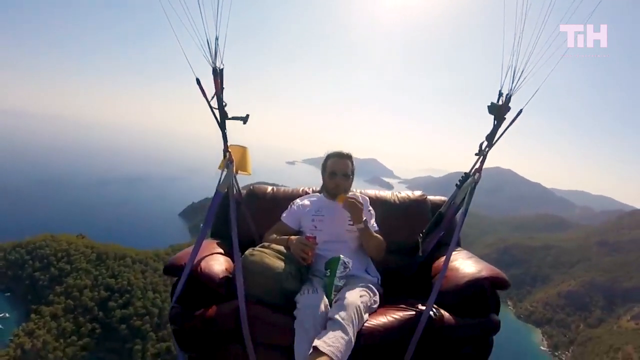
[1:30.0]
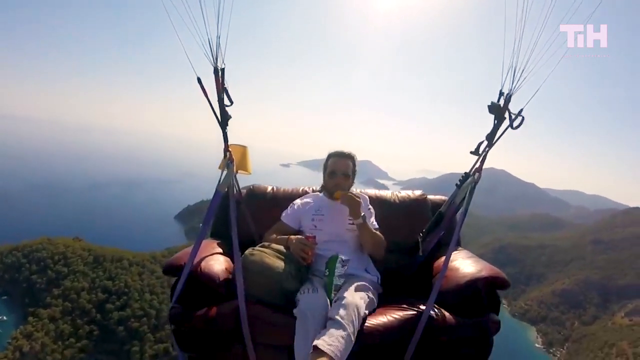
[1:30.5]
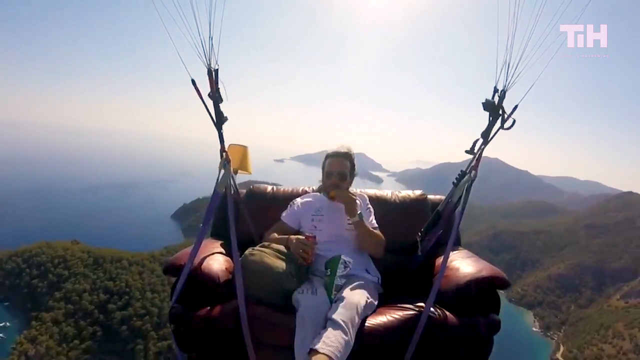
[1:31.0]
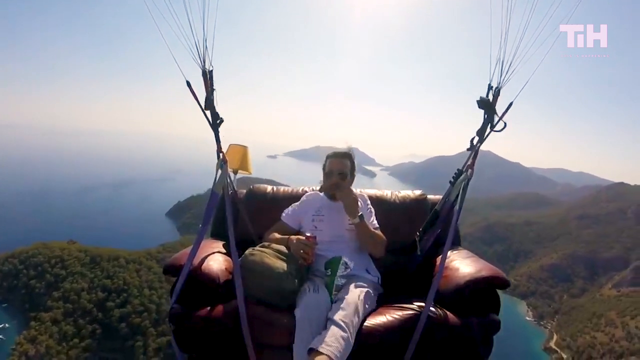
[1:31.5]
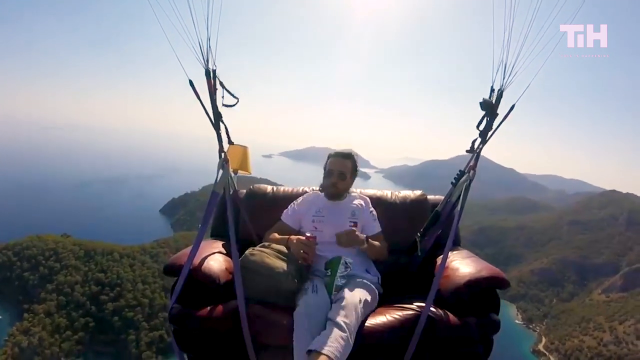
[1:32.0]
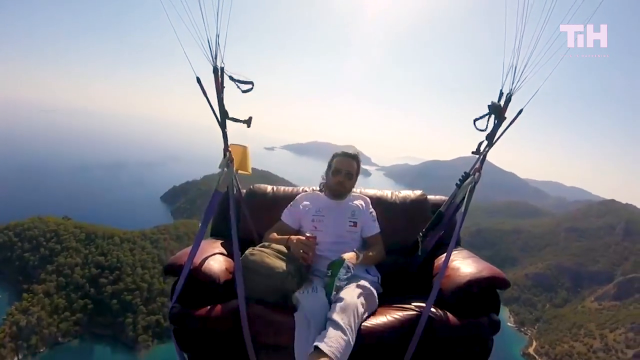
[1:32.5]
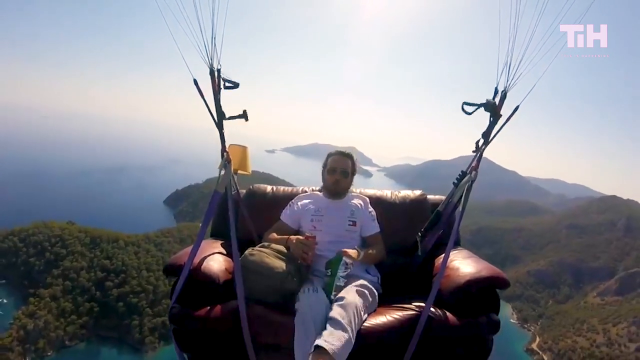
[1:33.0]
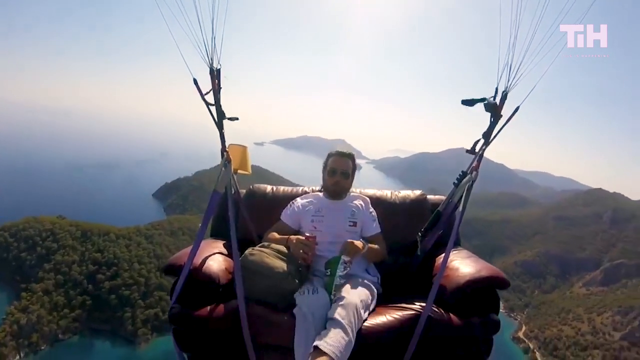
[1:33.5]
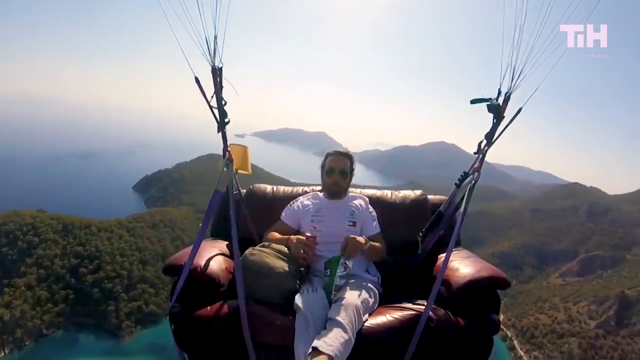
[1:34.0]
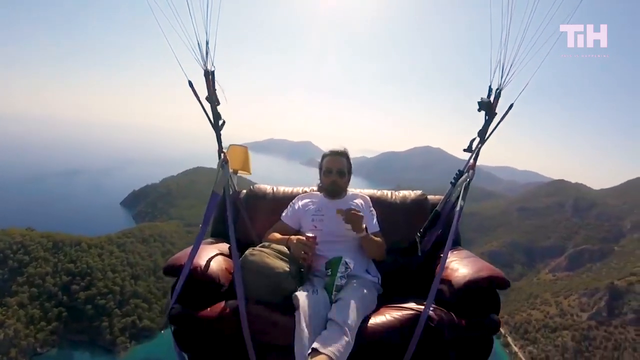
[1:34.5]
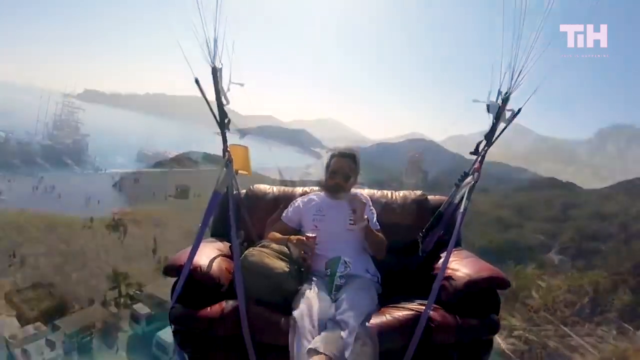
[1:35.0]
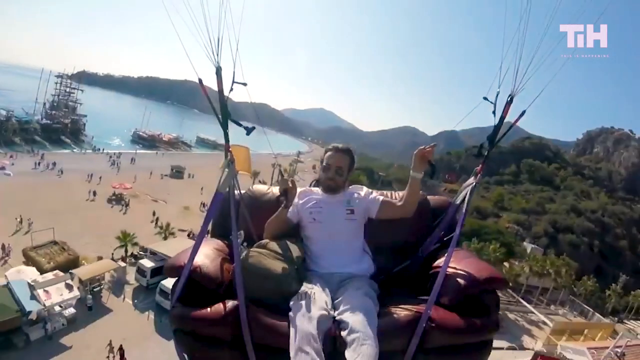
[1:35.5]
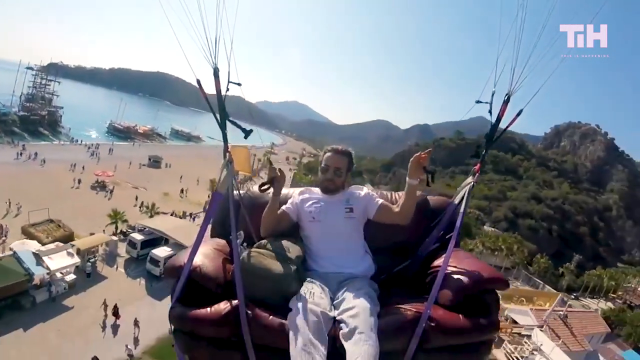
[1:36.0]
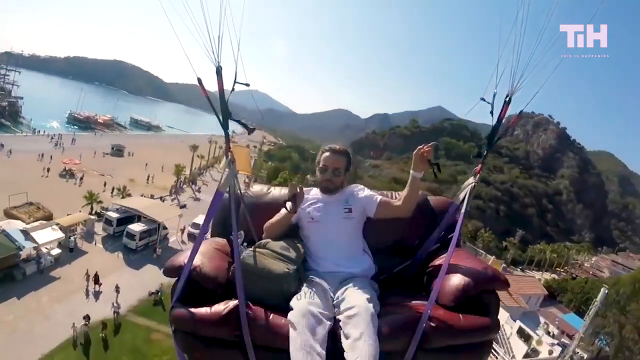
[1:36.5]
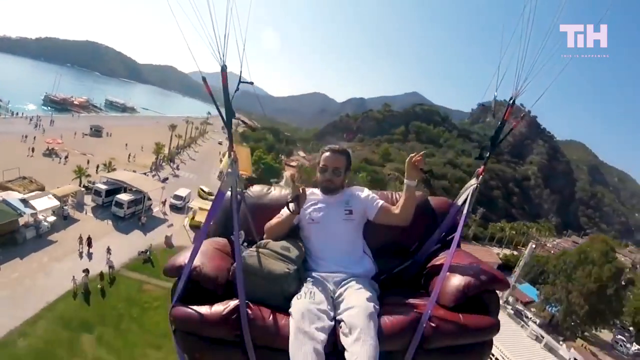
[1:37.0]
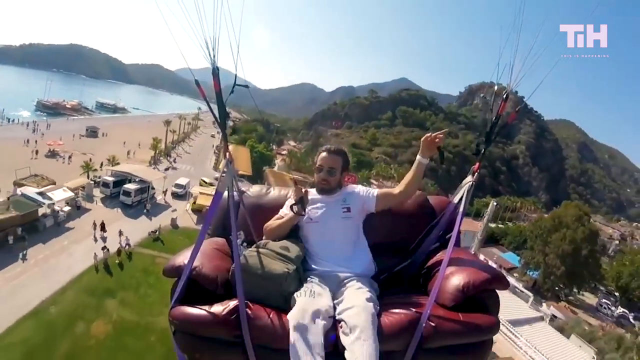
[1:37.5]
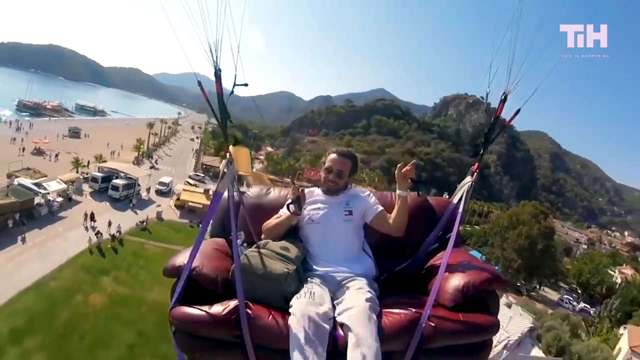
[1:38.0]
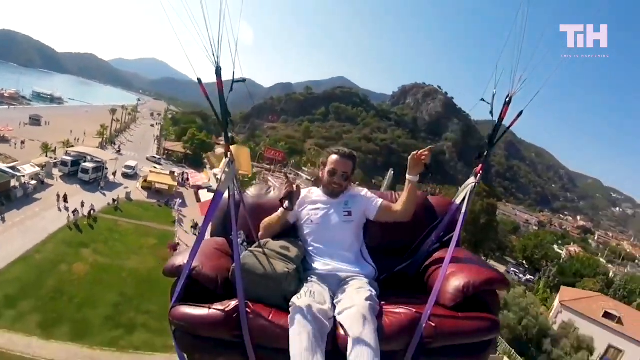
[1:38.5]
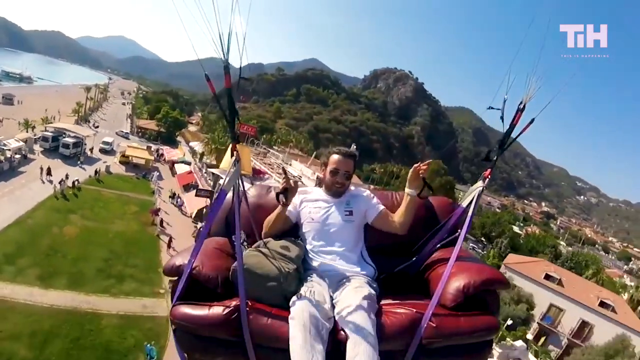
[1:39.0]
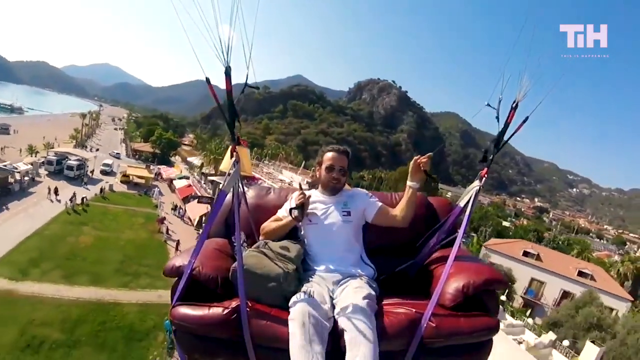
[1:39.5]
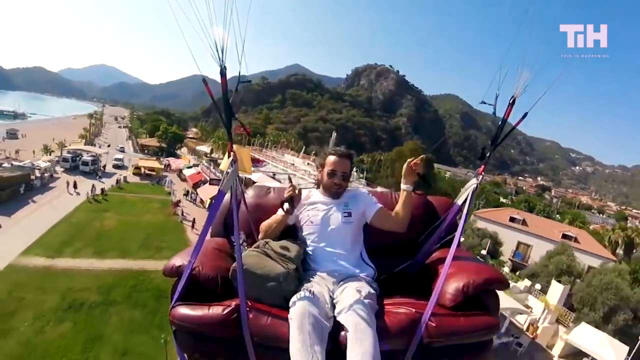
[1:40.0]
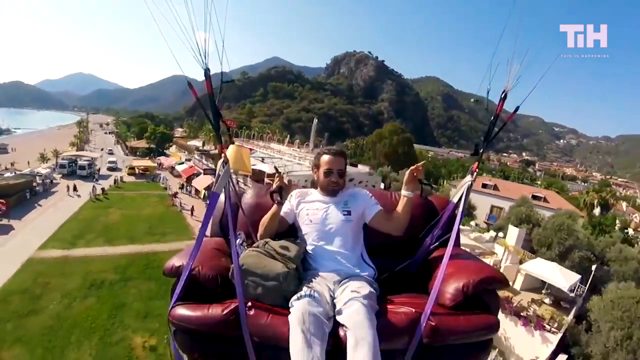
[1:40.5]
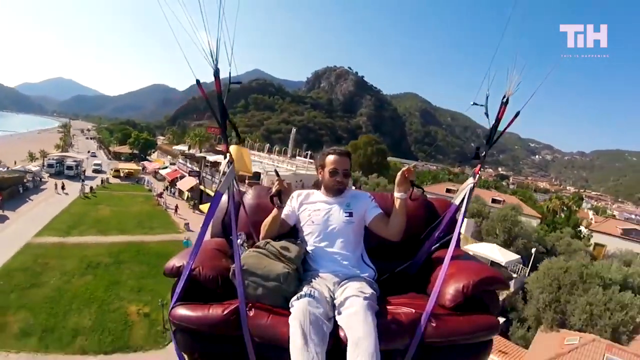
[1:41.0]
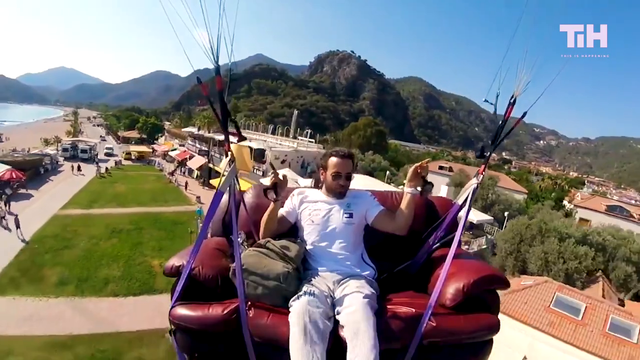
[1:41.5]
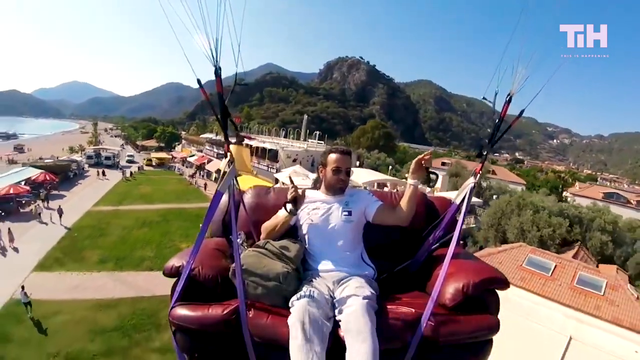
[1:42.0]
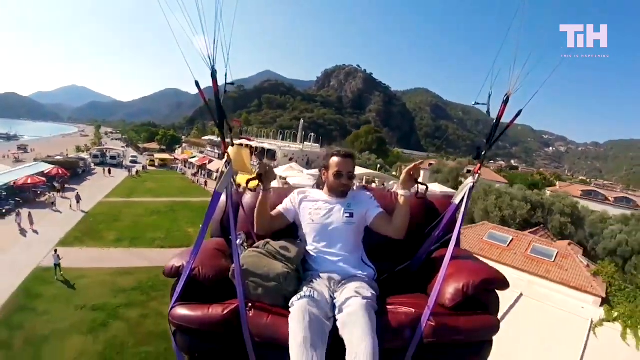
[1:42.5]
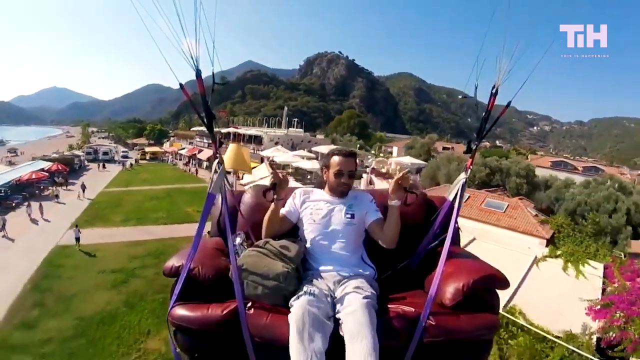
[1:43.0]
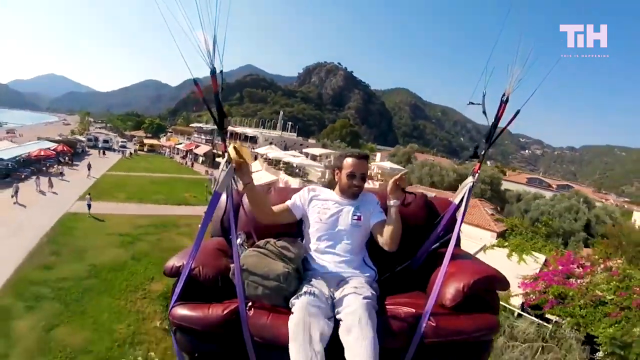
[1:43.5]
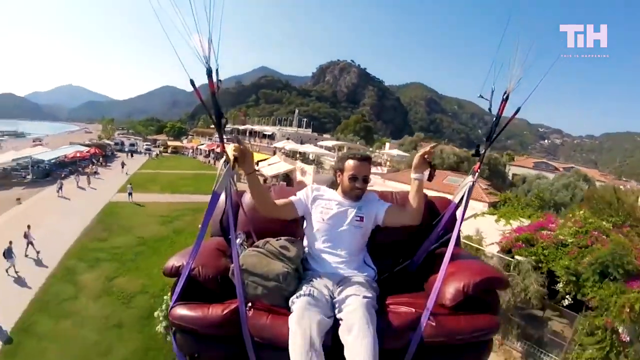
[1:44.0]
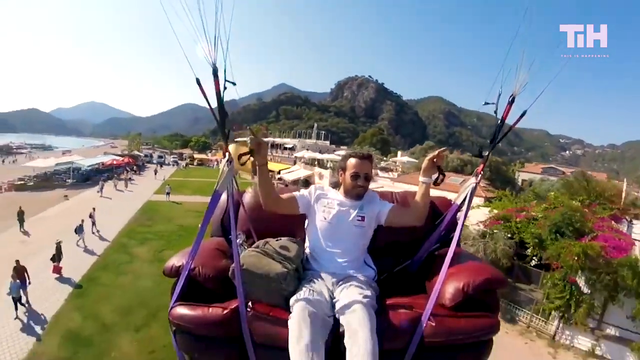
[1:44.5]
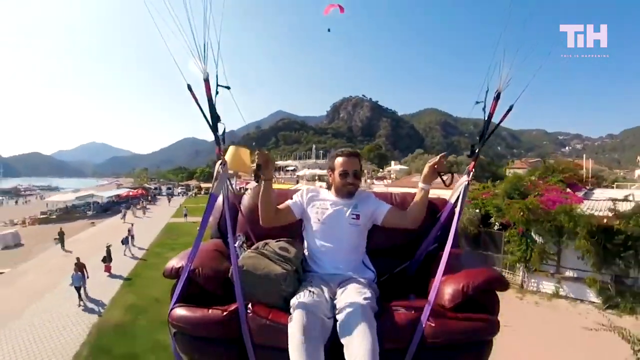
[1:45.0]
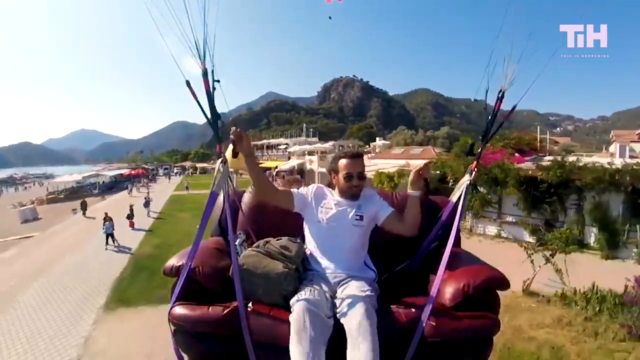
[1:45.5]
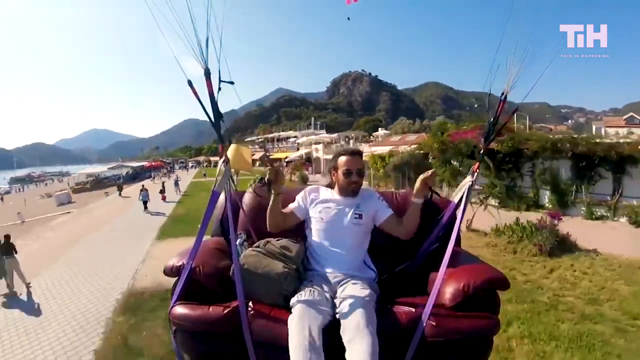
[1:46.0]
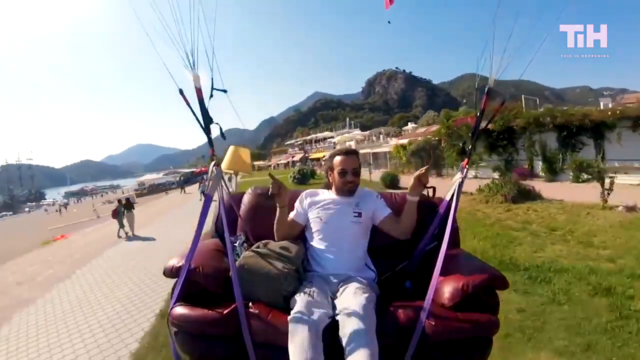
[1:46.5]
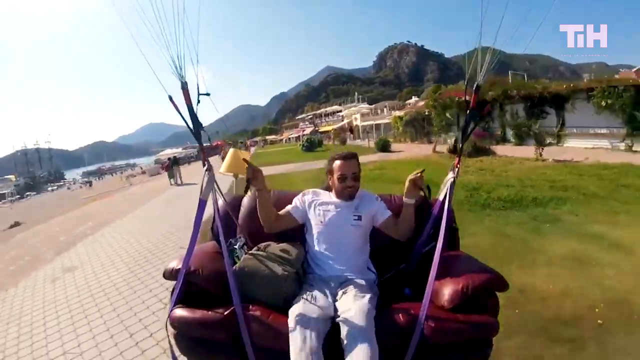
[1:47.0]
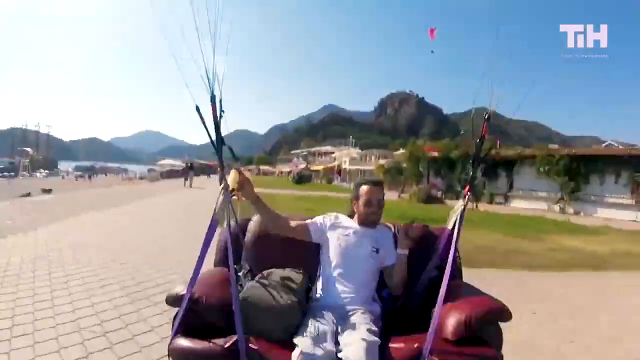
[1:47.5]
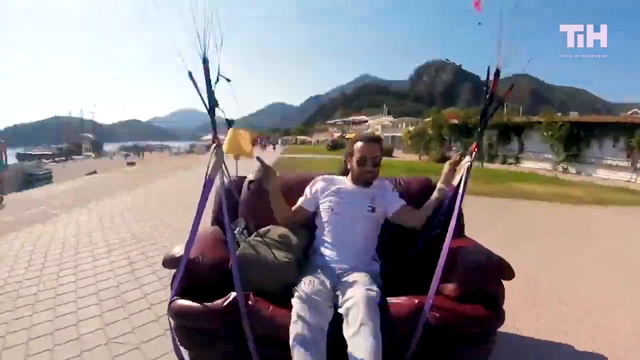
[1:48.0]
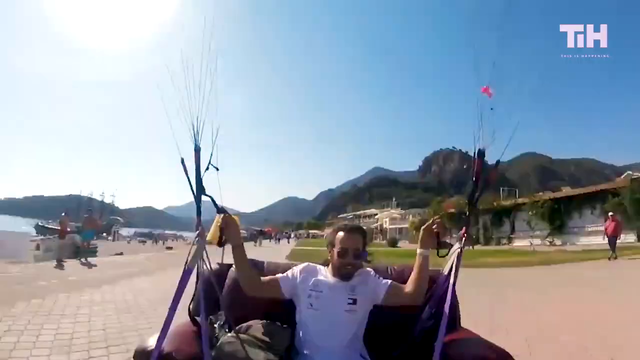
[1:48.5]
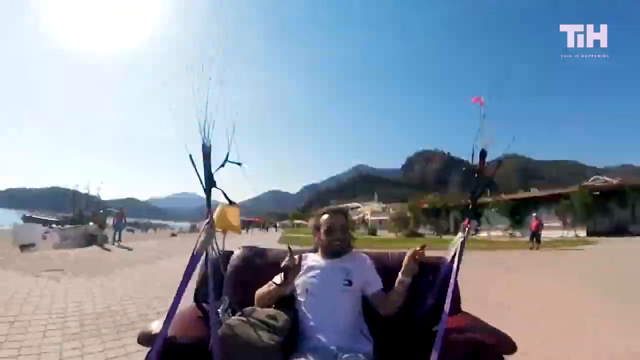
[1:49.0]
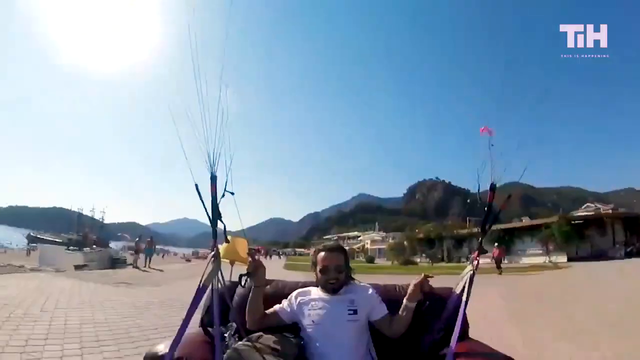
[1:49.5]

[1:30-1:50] The couch flyer continues flying on his couch, calmly eating a snack. He uses the parasailing cords to bring himself back in over the mountainside and land the couch, continuously pulling on the straps on the left and right until he finds a good landing spot. Plenty of spectators are on the ground. To balance the couch for the landing, he pulls more on the left or the right as needed, and he seems to pull both straps at the same time to stop the flight and land safely. Some spectators seem aware that a man on a couch is about to land, while others do not seem to notice him in the air.